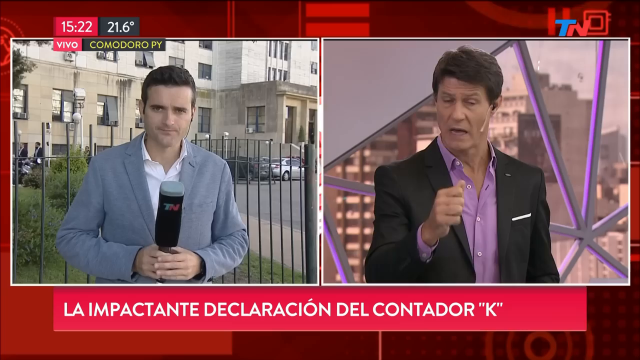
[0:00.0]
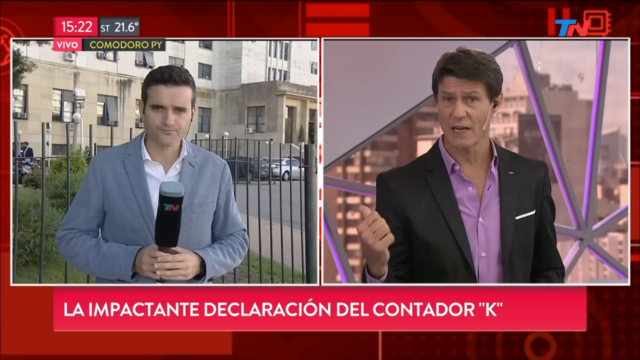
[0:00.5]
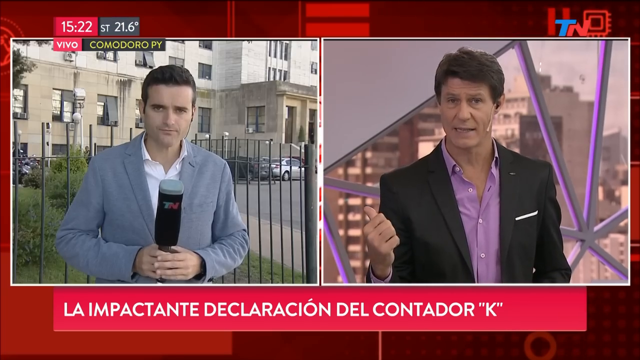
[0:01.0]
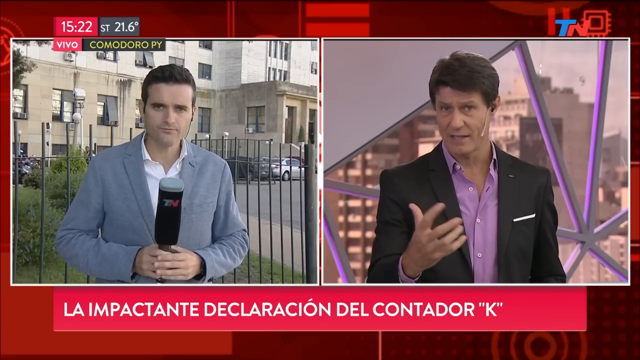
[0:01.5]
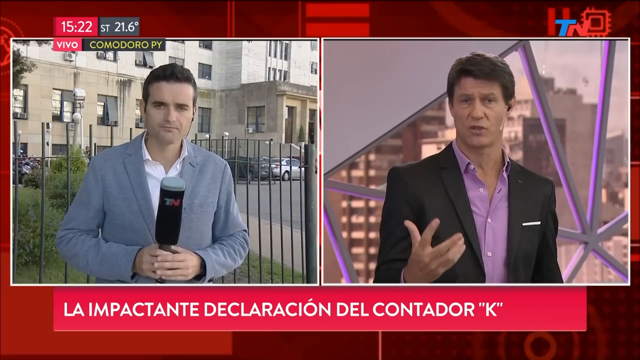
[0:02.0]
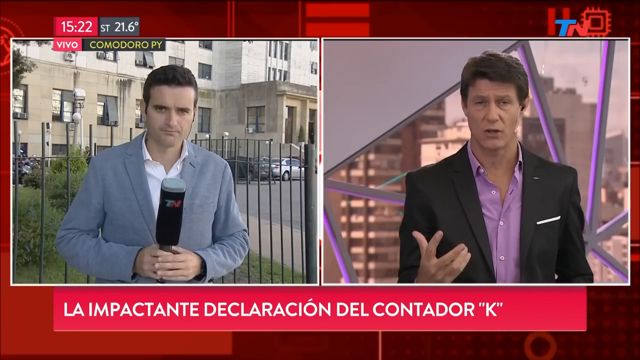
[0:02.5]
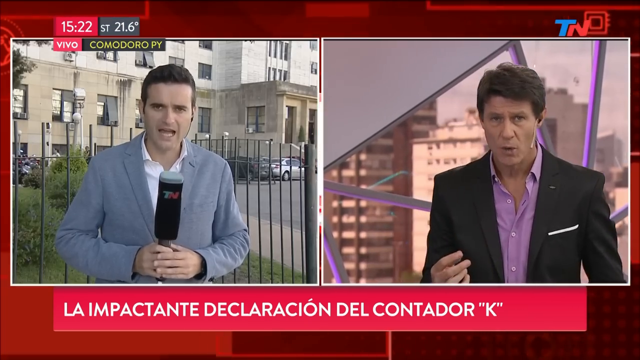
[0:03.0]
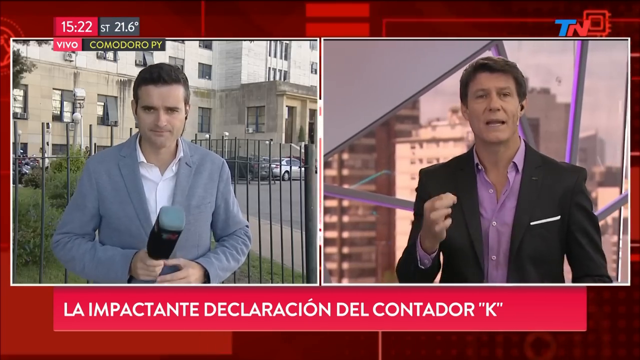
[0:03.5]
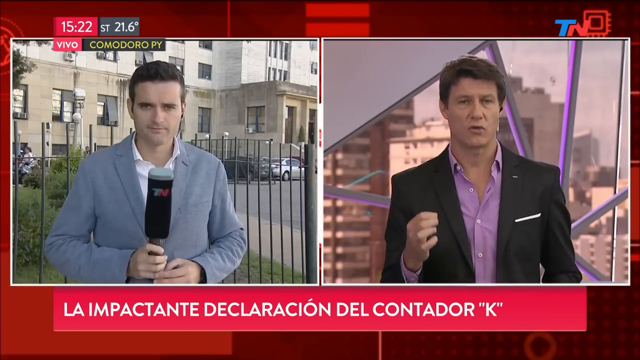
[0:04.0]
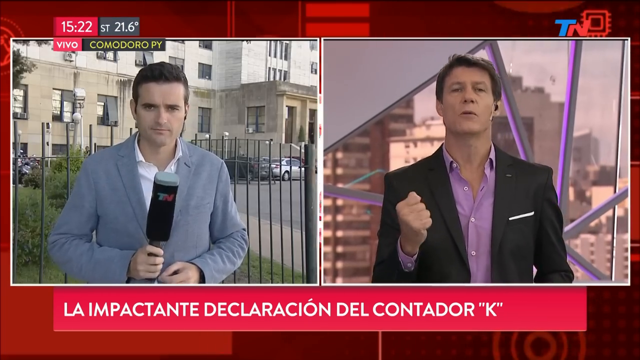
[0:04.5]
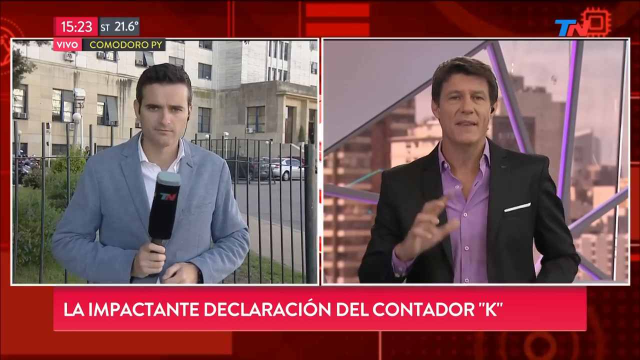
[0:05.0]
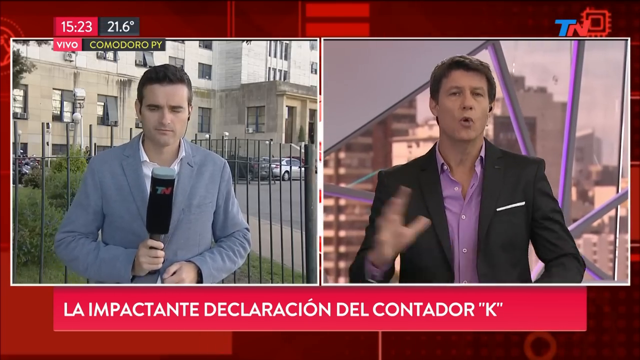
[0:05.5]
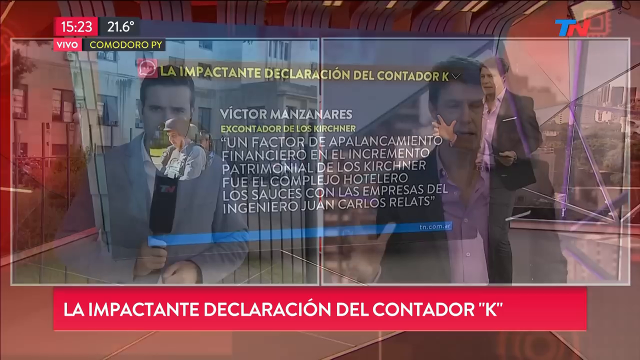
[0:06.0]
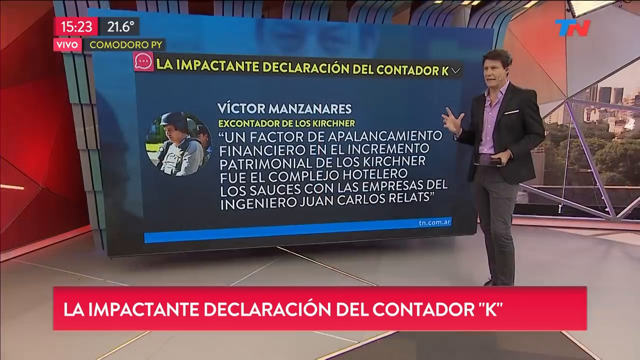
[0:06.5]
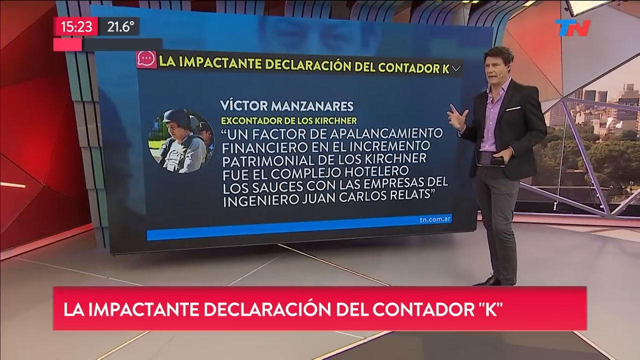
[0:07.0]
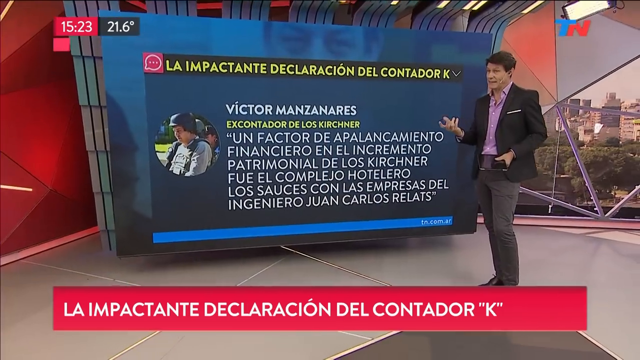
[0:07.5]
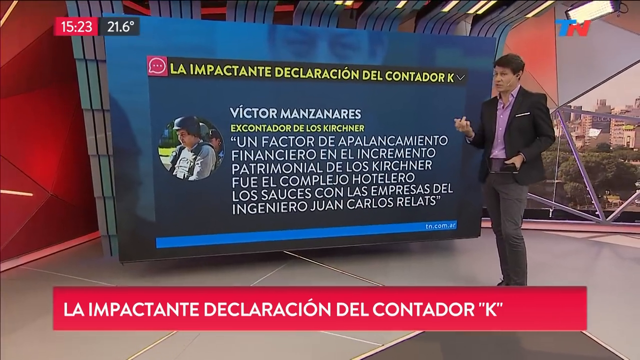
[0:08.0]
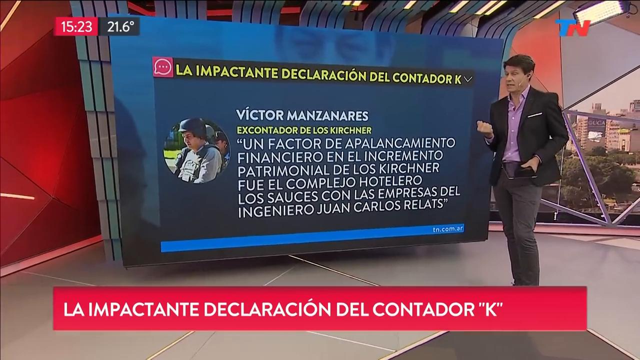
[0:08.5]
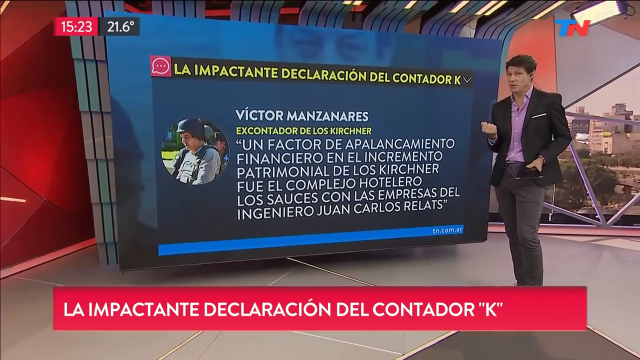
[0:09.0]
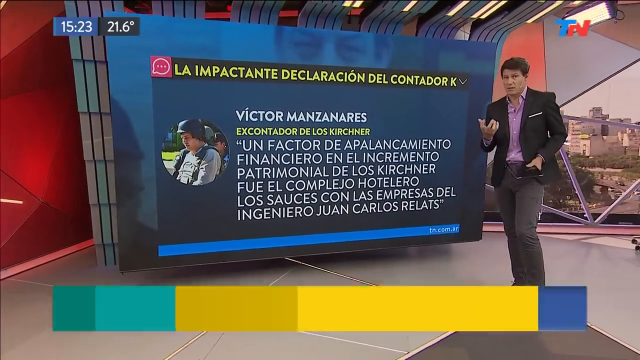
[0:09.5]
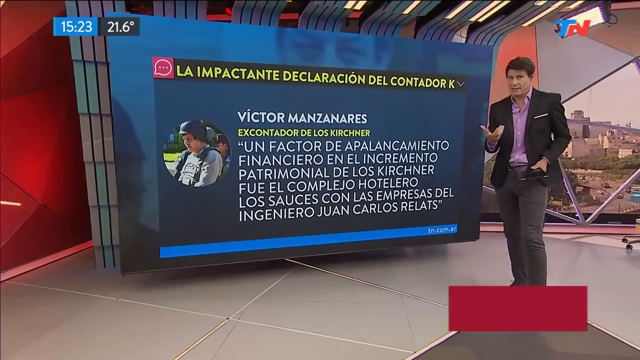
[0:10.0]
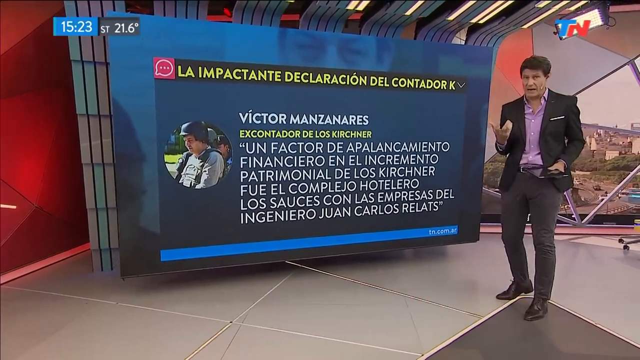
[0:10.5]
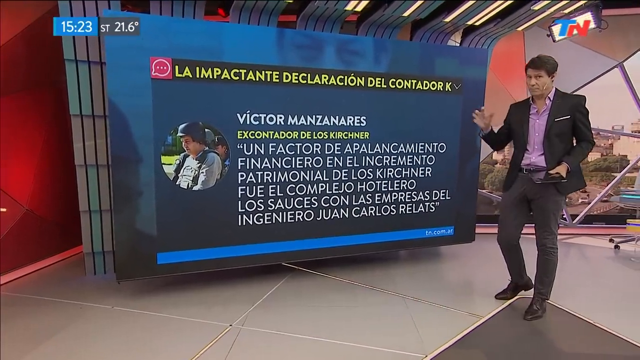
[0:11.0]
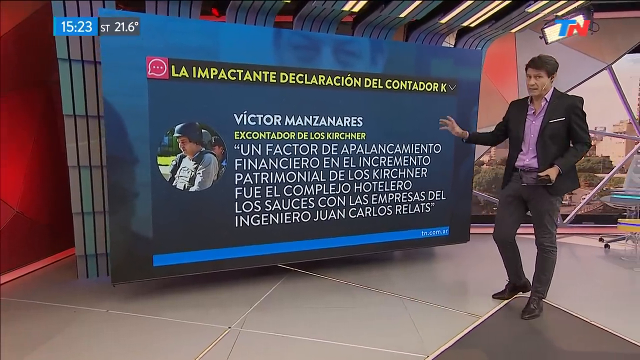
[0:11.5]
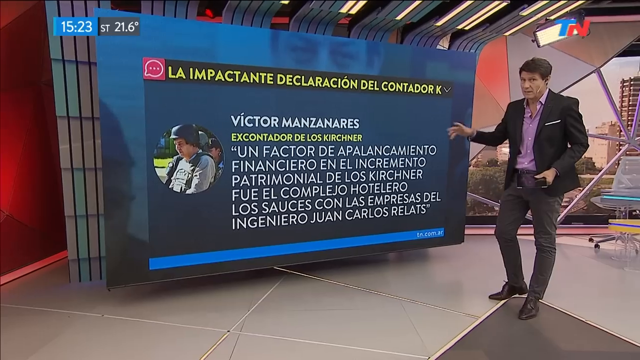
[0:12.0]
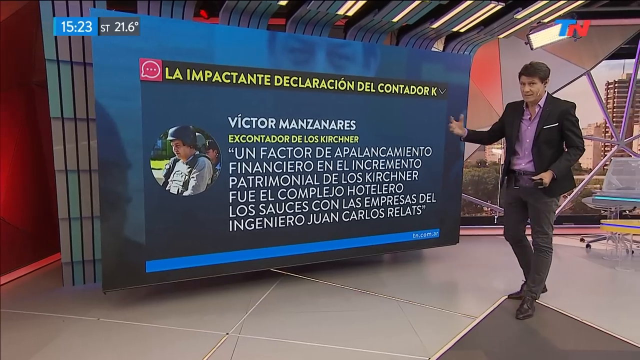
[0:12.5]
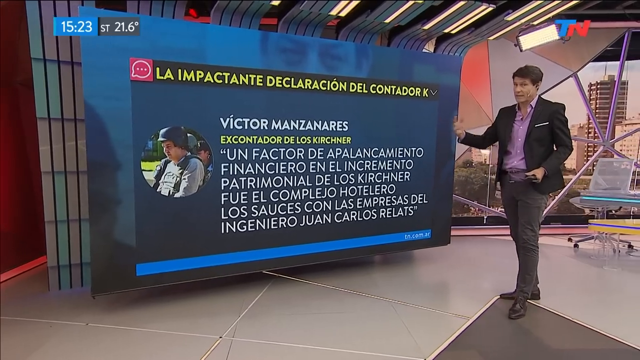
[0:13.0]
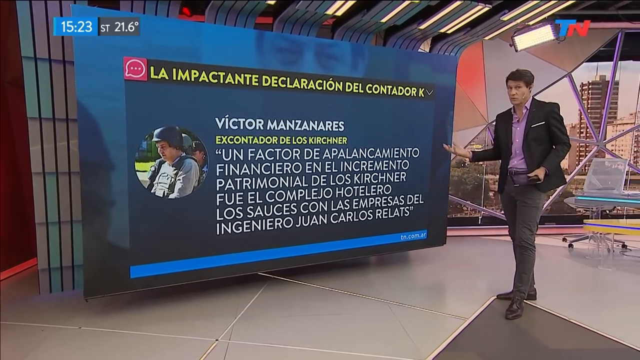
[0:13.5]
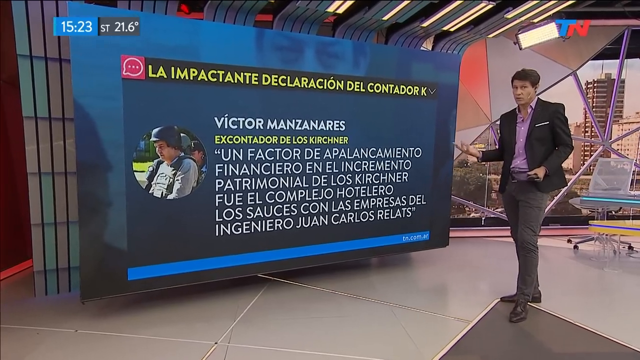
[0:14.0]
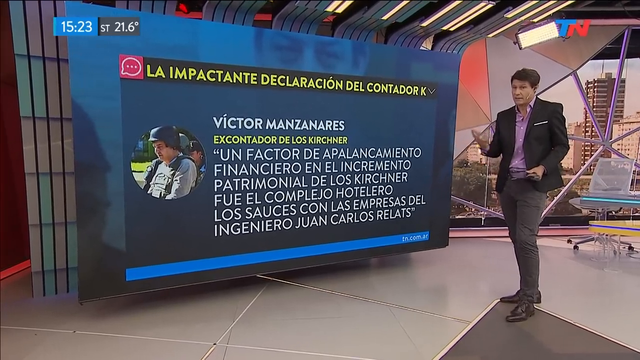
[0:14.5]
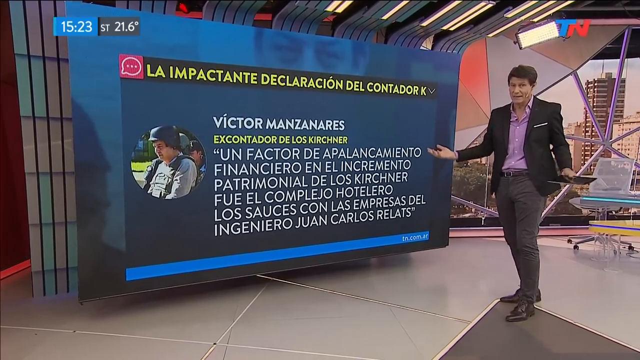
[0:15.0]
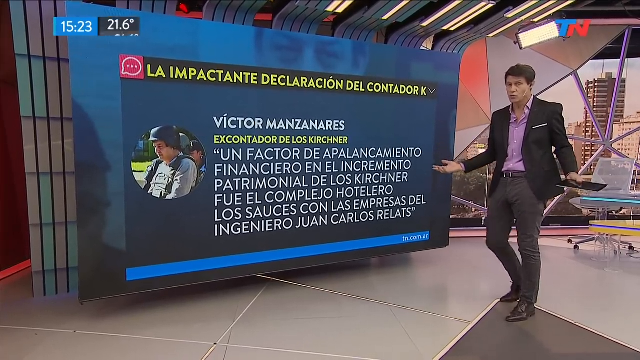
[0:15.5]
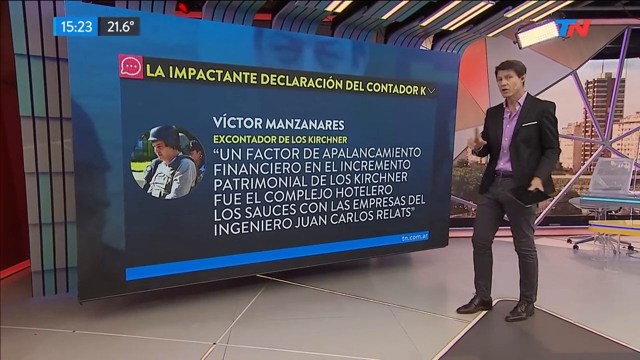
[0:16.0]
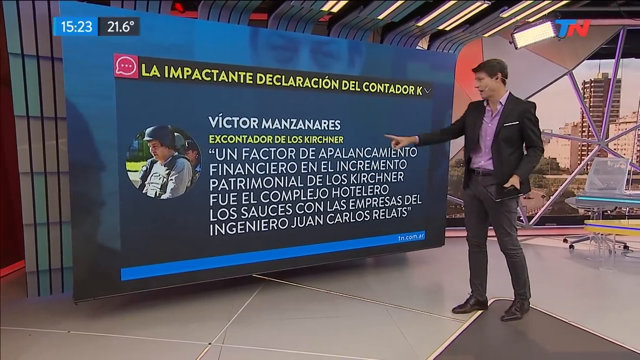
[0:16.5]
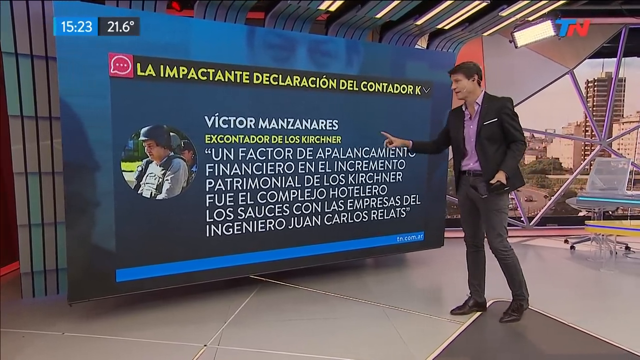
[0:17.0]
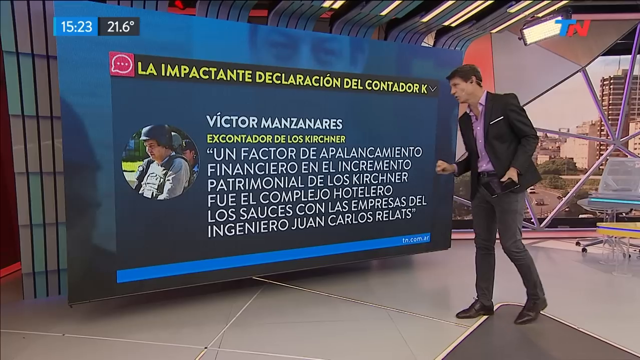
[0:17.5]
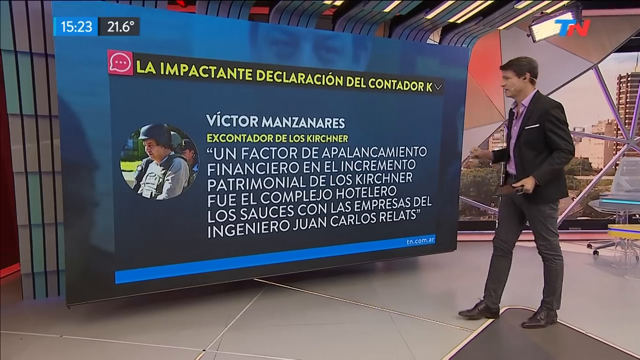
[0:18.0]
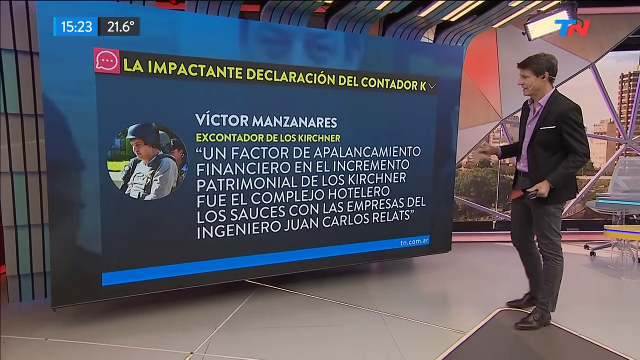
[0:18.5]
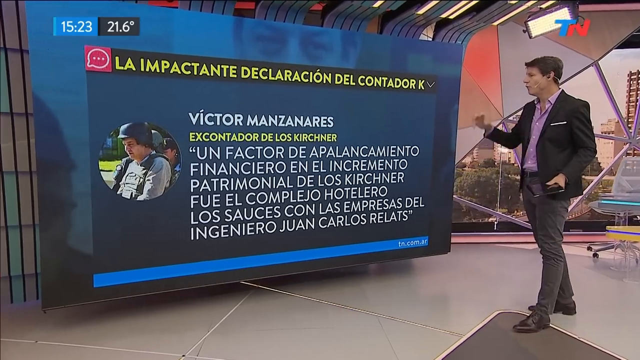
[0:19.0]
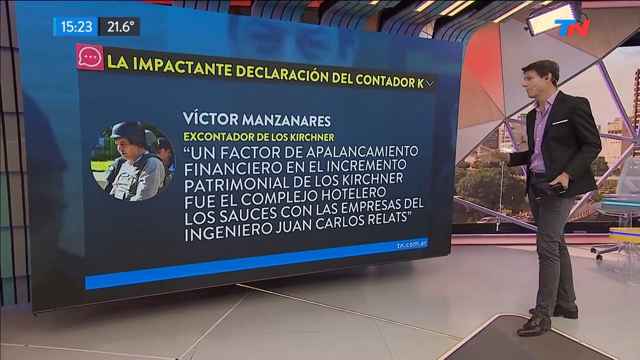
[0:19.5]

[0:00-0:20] What appears to be some kind of television show opens with side-by-side panels. On the left, a white man in a gray jacket and white shirt holds a big microphone in both hands in front of some kind of large building. On the right, a white man in a black suit and purple shirt looks like he is in a studio of some sort. Along the bottom is a red banner with white text that looks to be in a language other than English. The man on the right, in the suit, talks into the camera, very emotional, using his right hand heavily as he speaks, moving it side to side and at one point in an almost circular motion. The view then zooms out and focuses on the man in the black suit jacket, showing his whole body. He stands next to a large television of some sort whose screen shows mostly white text with some yellow. He seems to look at it and then looks at the camera. The camera moves slightly toward the left. He uses both arms and hands, points at the TV several times, and holds something in one hand that almost looks like maybe a tablet of some sort.